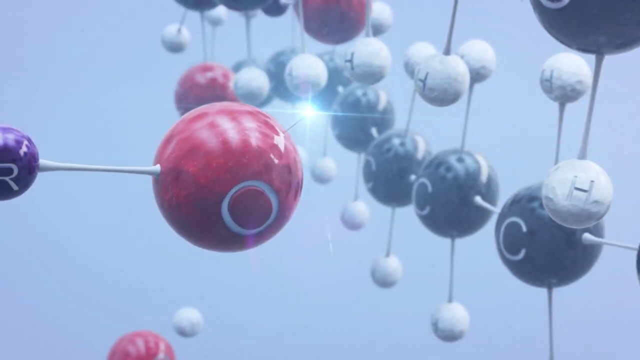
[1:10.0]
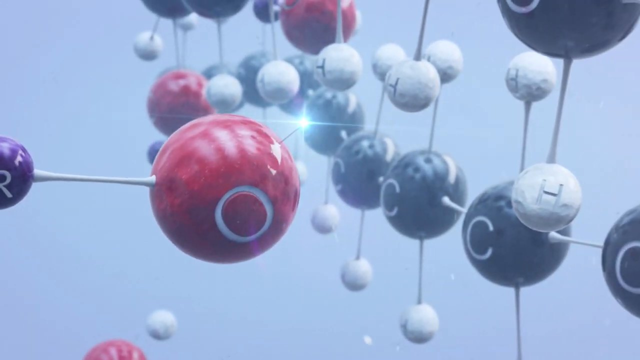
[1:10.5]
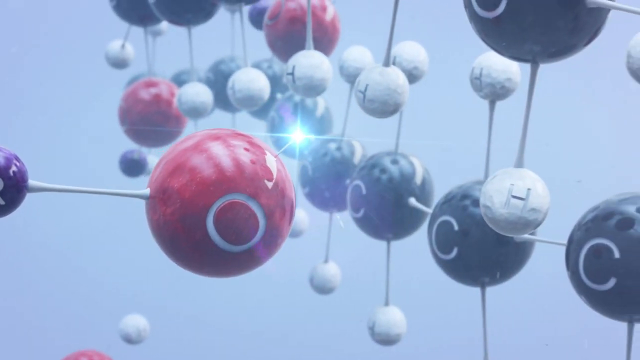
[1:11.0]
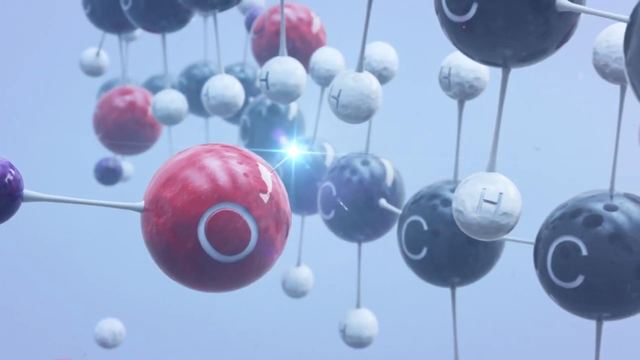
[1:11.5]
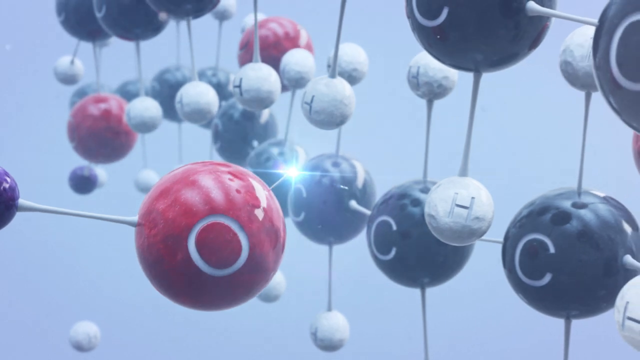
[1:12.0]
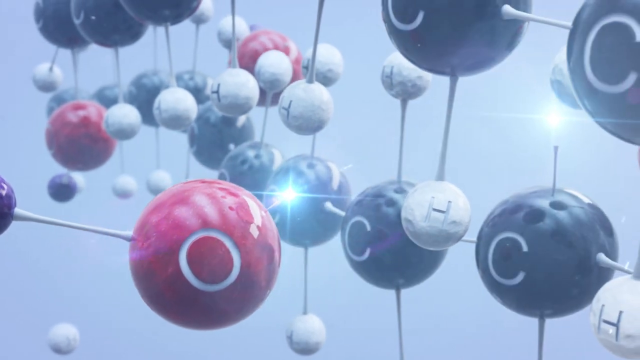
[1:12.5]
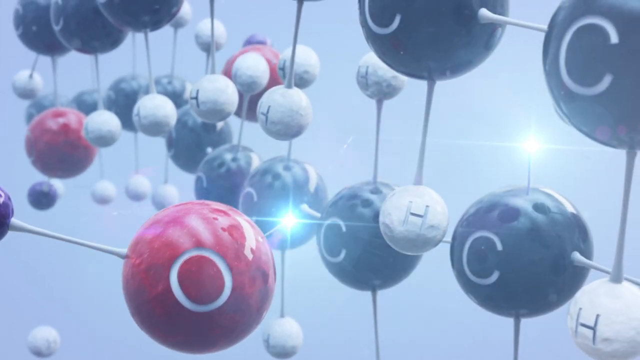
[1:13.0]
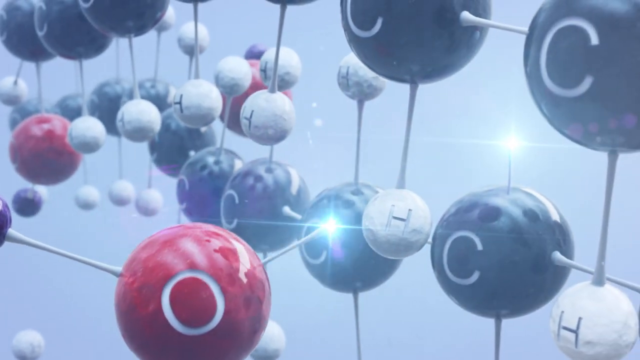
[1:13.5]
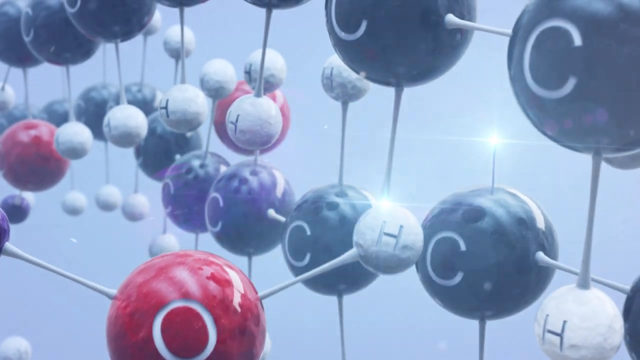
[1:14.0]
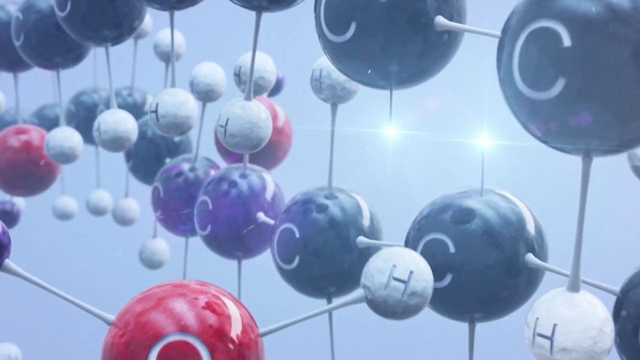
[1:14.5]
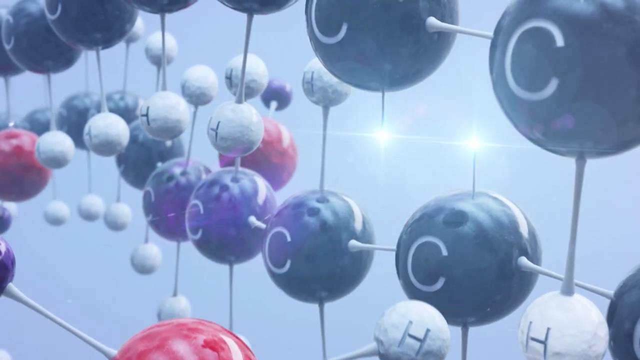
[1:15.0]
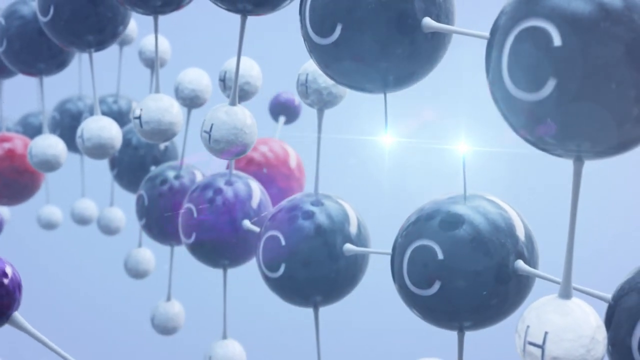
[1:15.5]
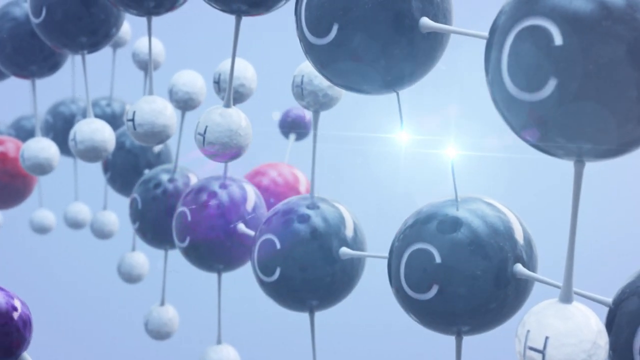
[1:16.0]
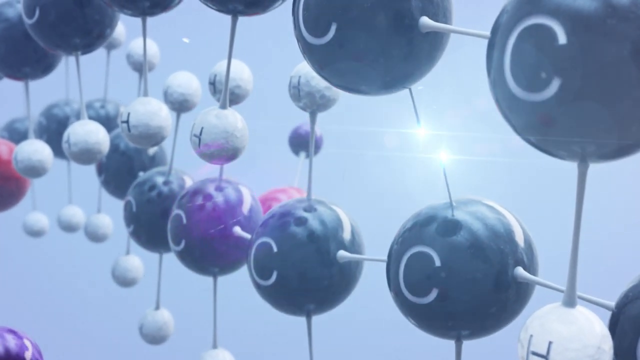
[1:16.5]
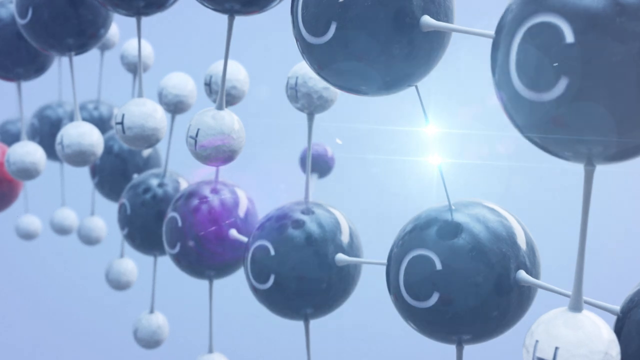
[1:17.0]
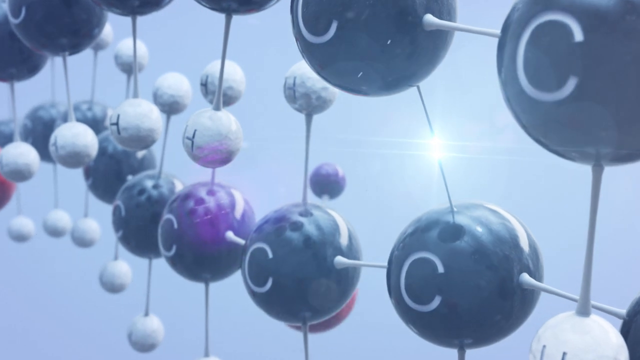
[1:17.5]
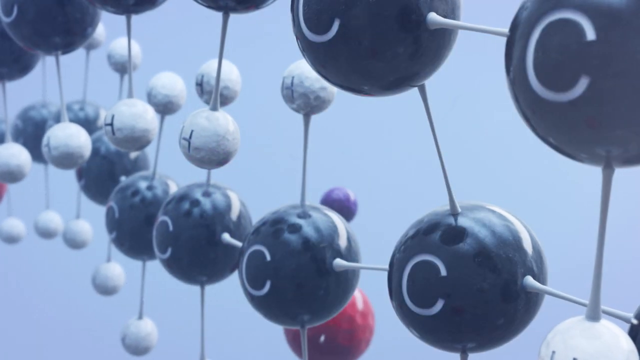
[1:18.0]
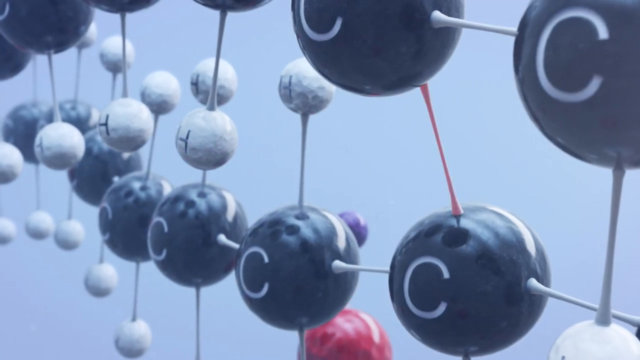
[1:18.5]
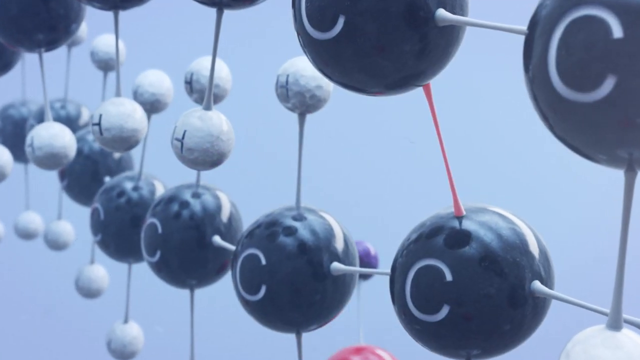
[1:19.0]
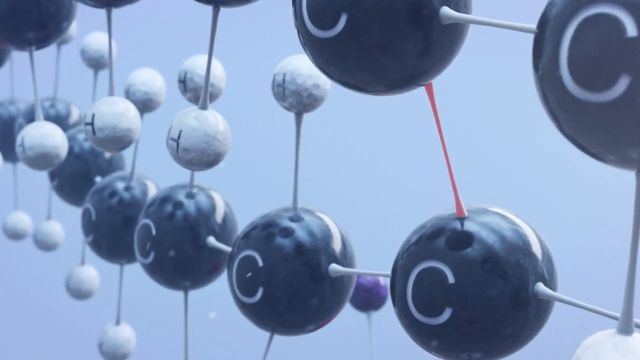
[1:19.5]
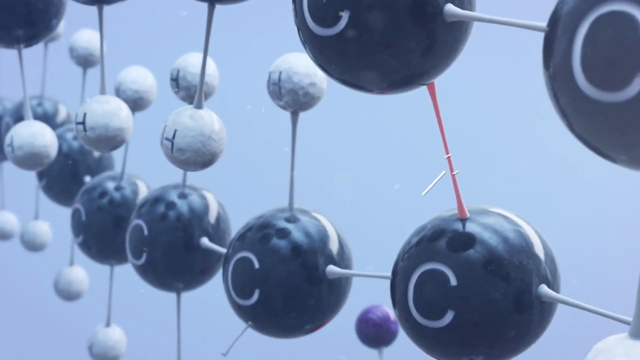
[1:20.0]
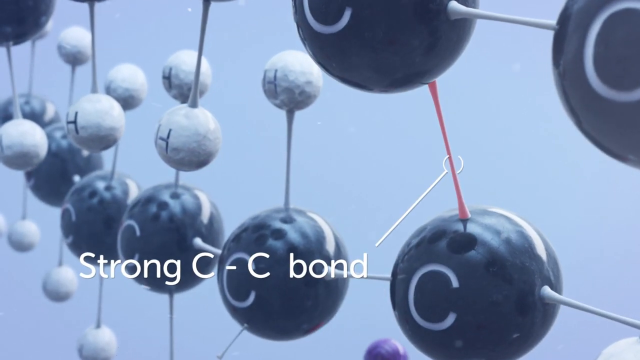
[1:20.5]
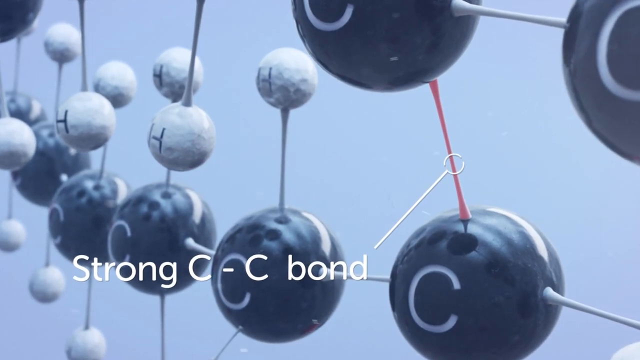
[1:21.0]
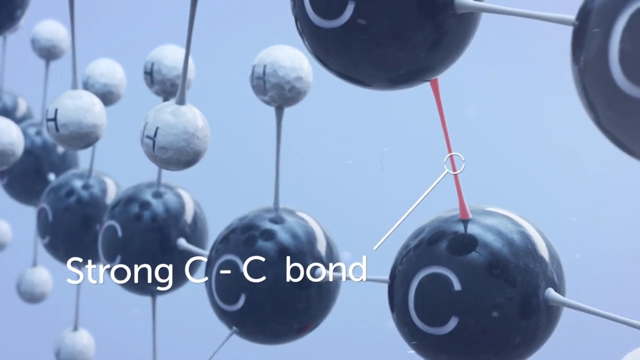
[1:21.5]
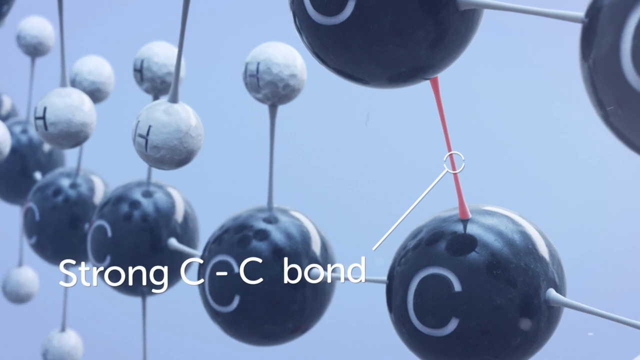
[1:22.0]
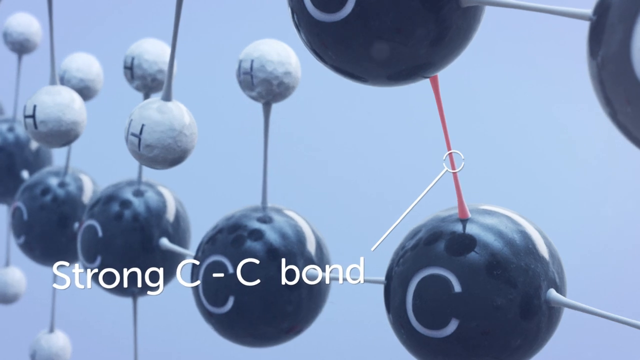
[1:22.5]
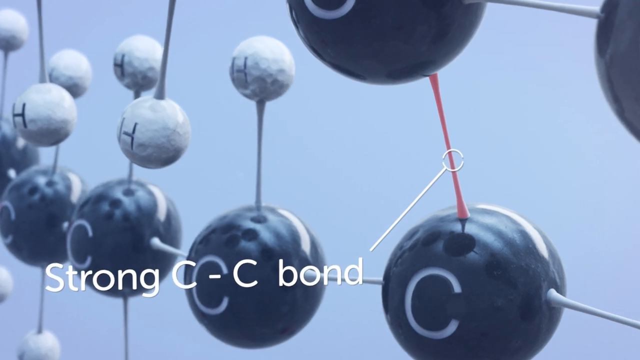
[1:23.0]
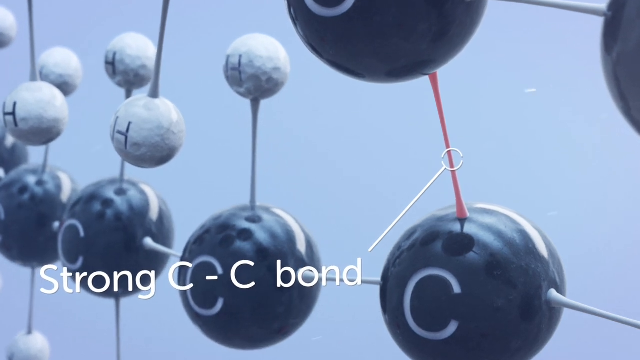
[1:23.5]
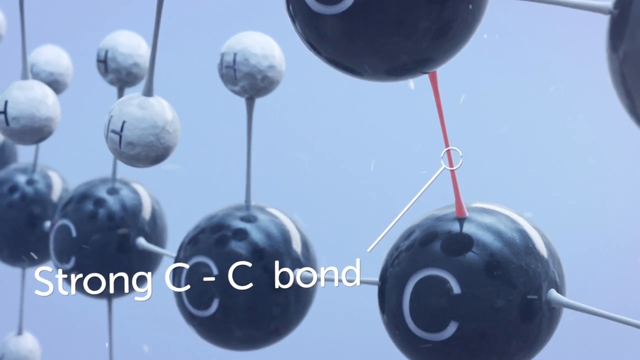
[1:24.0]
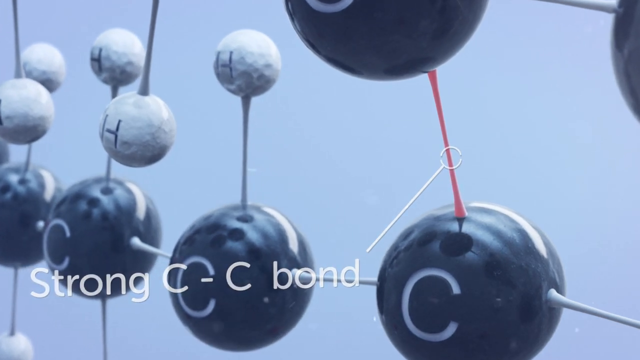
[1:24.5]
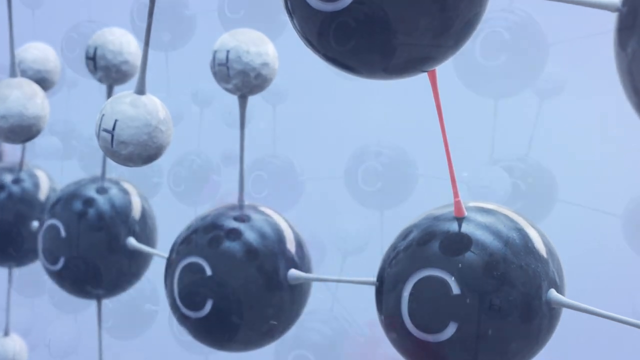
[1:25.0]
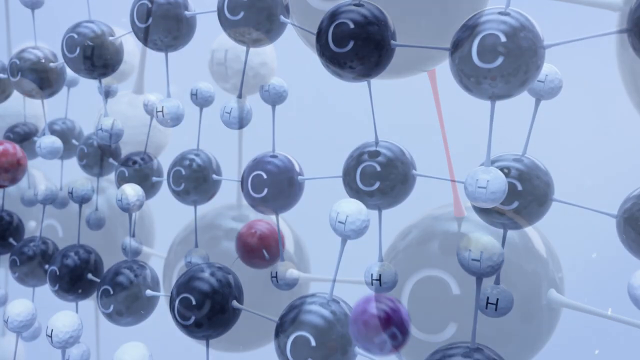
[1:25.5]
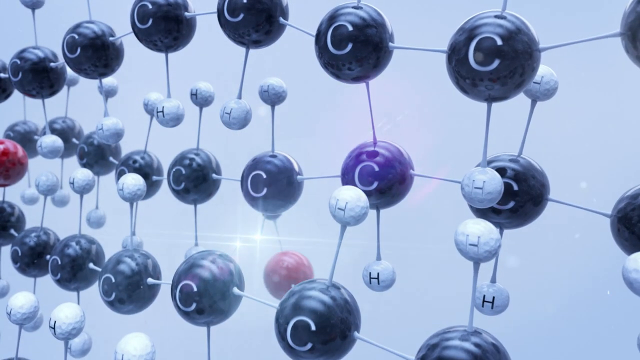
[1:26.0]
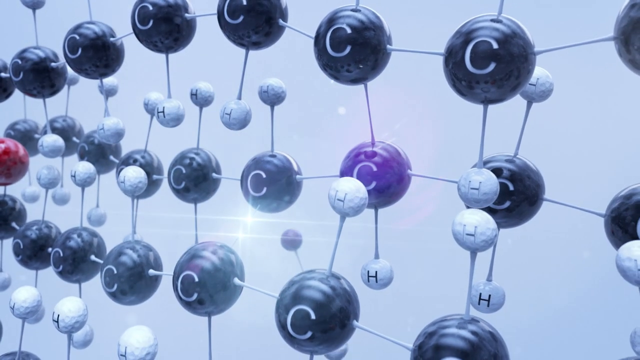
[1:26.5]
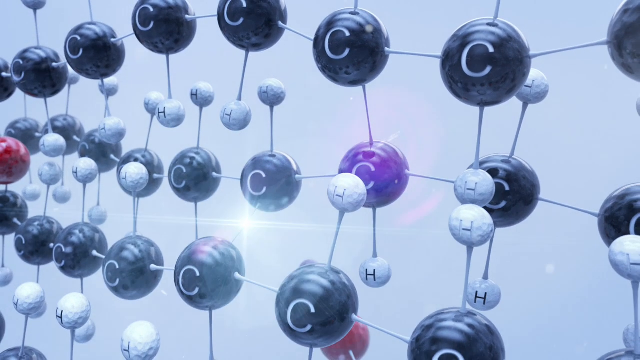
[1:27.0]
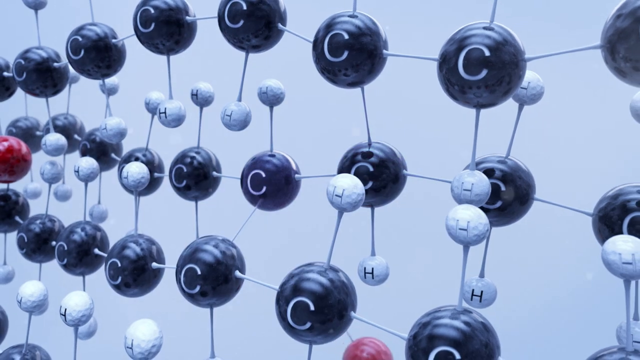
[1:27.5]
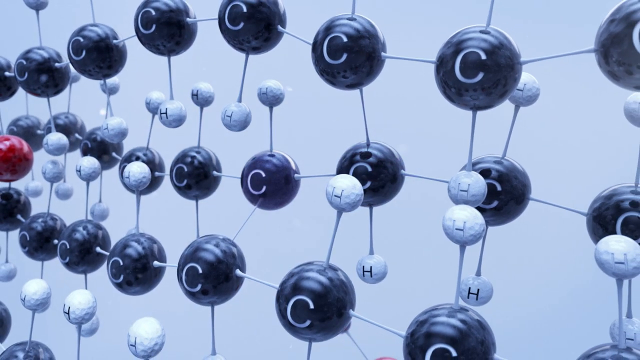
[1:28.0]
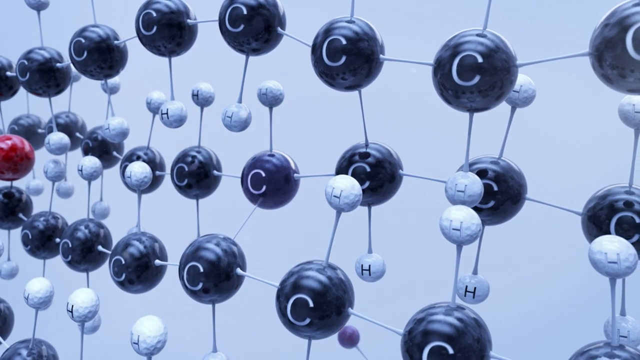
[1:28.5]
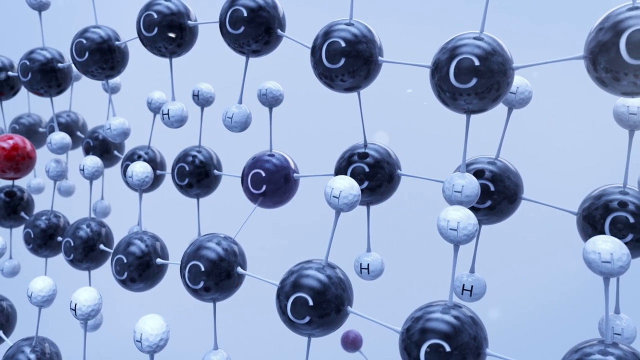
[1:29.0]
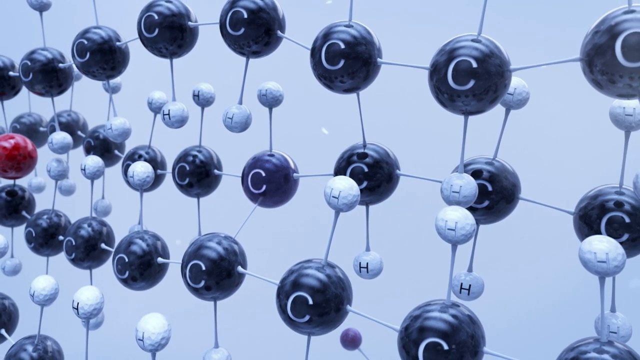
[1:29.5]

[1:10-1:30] On the right side of the screen is a row of seven black balls, all marked with the letter C. Little stems come off the top and bottom of the black balls, with white balls on their tips, each marked with the letter H. On the left side of the screen is a large red ball with the letter O on it. A white stem comes up off that ball, and a purple ball marked with the letter R is connected at its tip. The red balls come up to the white balls on the black balls and connect to them when they touch. When that happens, "strong C-C bond" appears in white at the bottom of the screen.